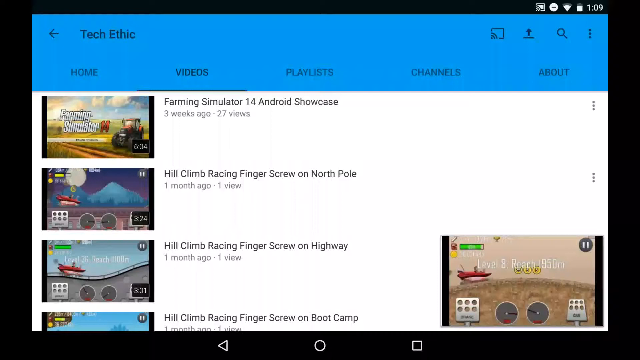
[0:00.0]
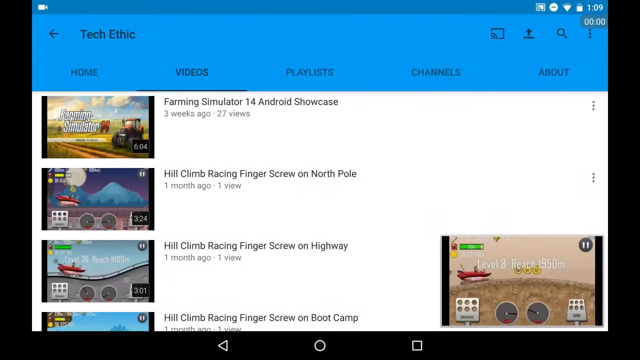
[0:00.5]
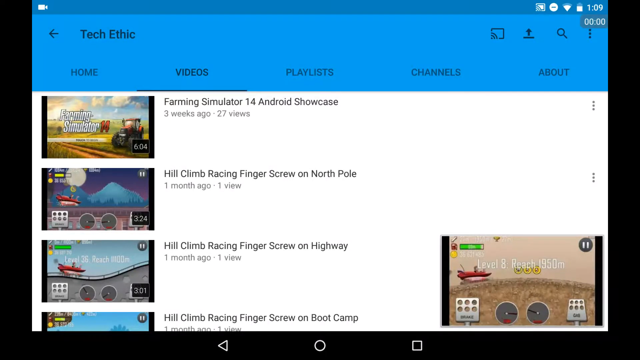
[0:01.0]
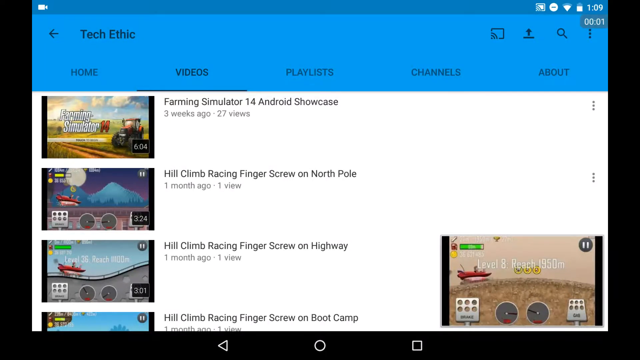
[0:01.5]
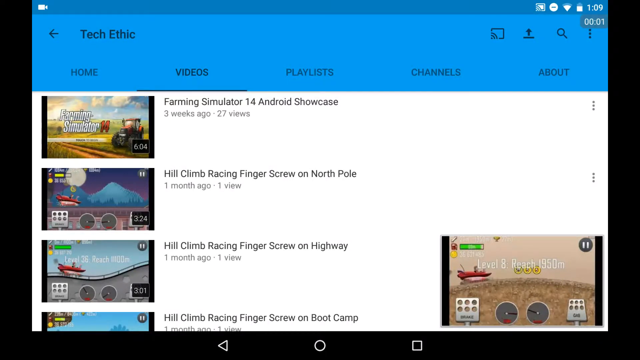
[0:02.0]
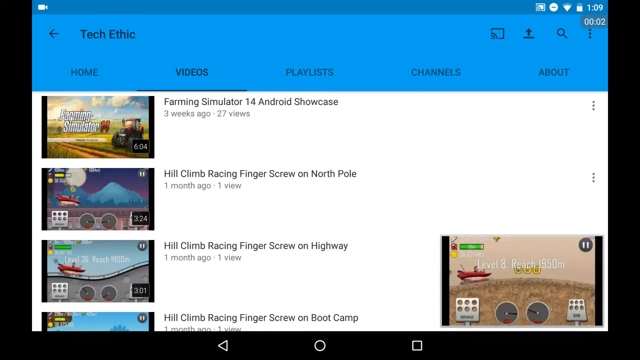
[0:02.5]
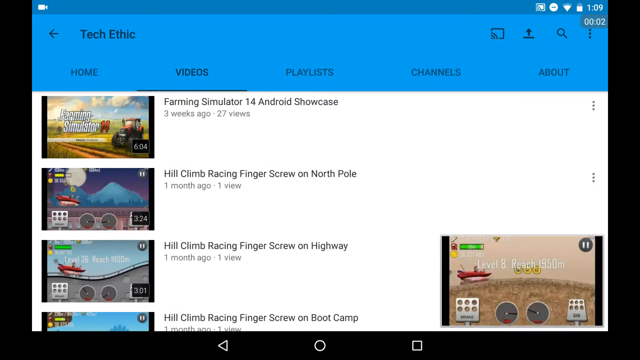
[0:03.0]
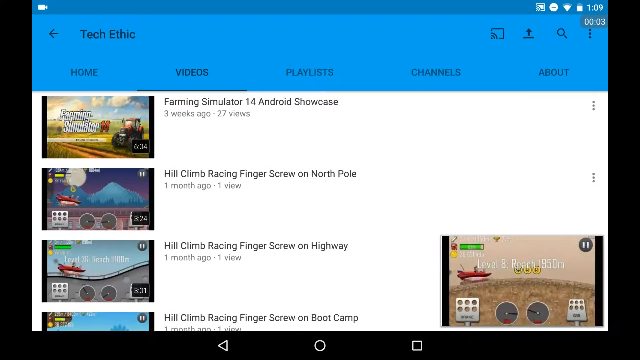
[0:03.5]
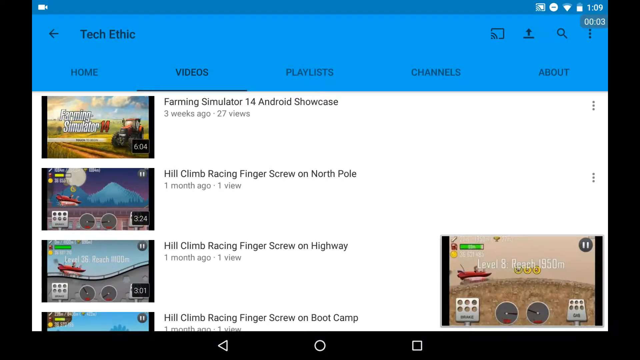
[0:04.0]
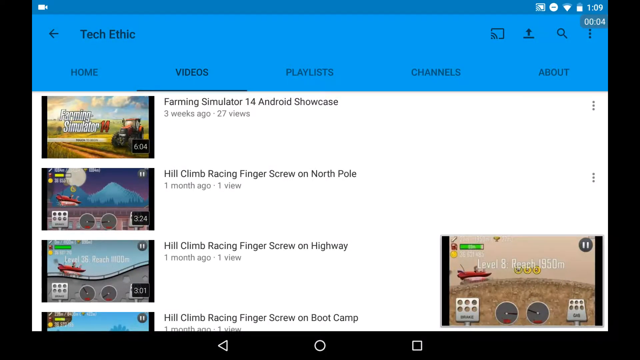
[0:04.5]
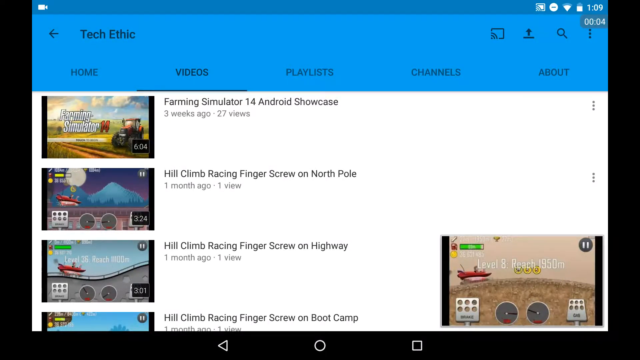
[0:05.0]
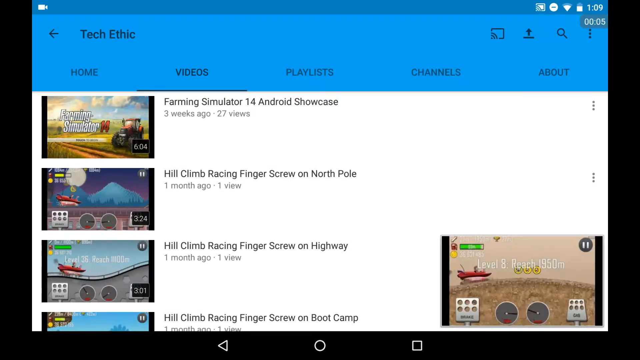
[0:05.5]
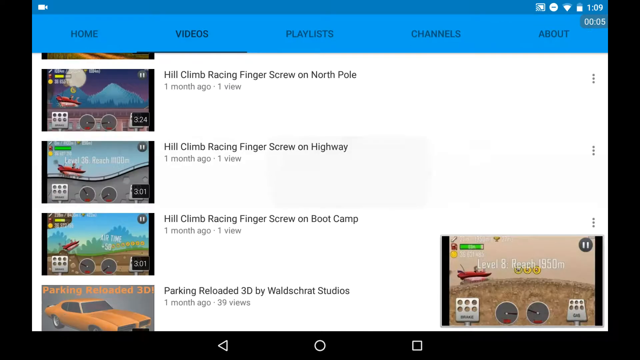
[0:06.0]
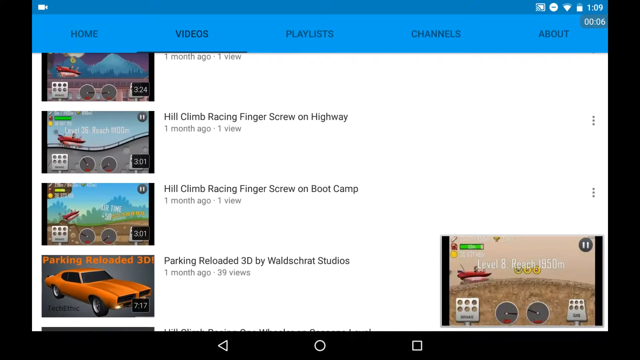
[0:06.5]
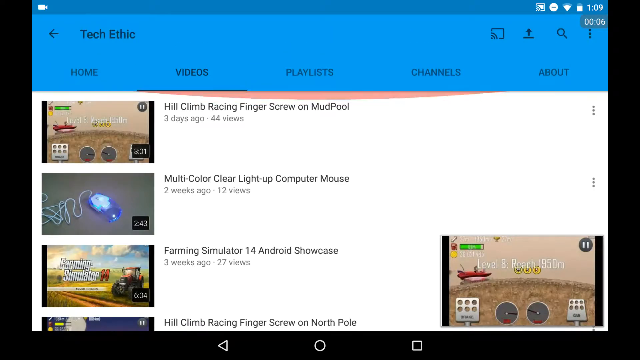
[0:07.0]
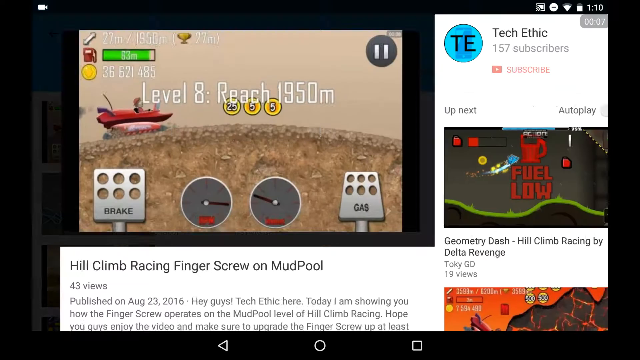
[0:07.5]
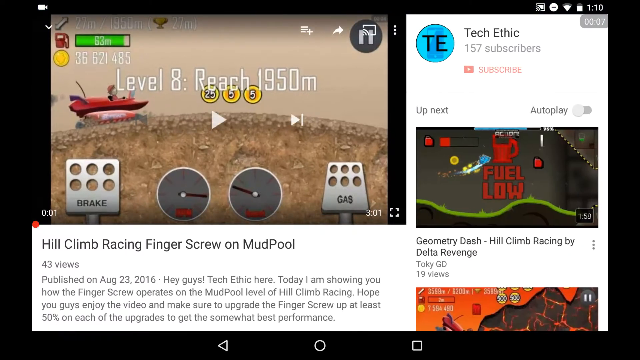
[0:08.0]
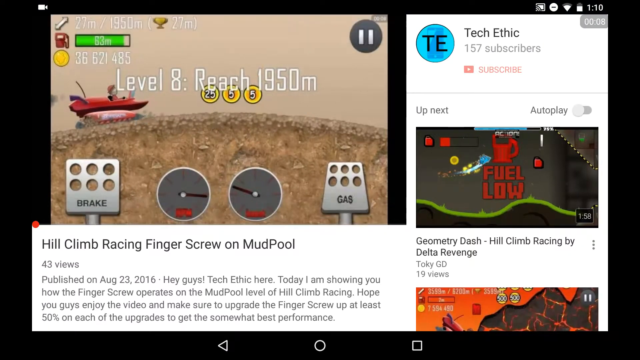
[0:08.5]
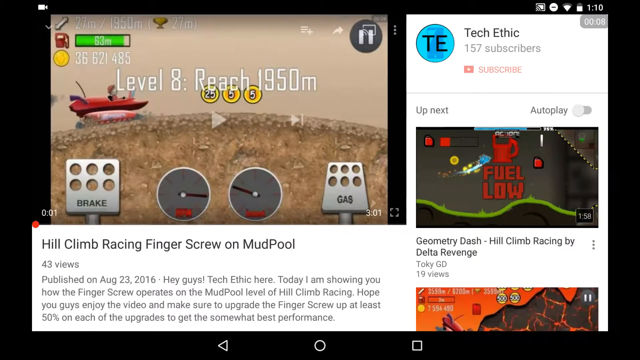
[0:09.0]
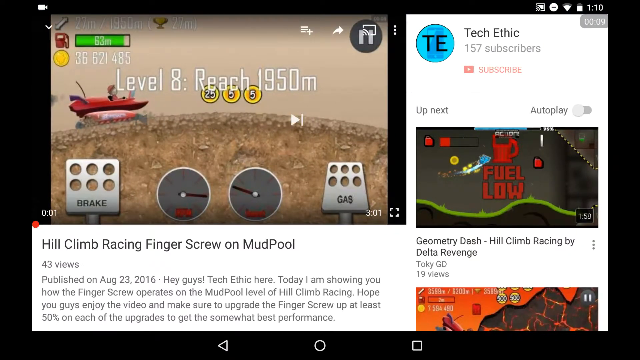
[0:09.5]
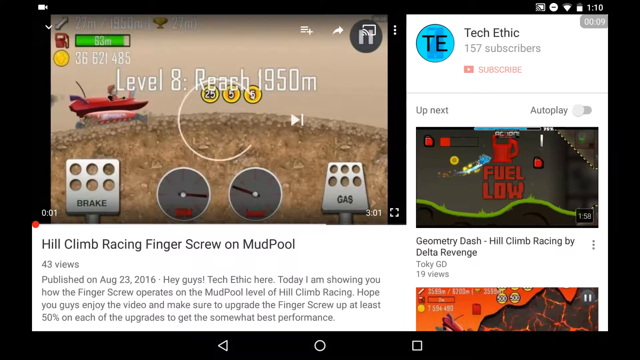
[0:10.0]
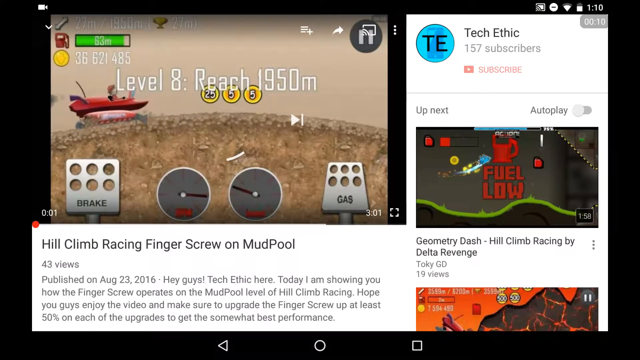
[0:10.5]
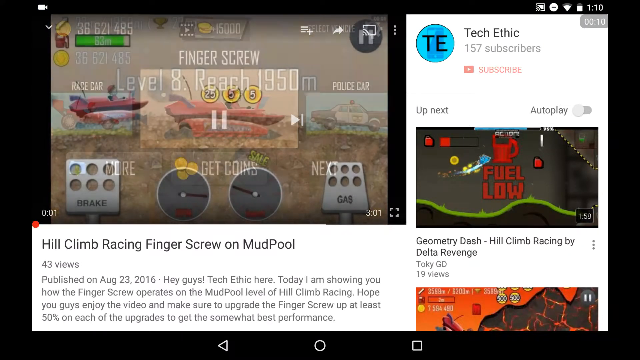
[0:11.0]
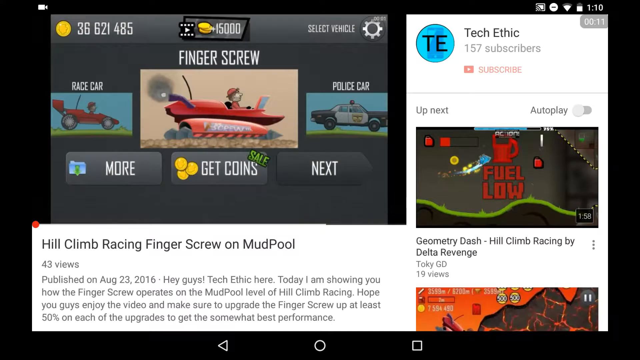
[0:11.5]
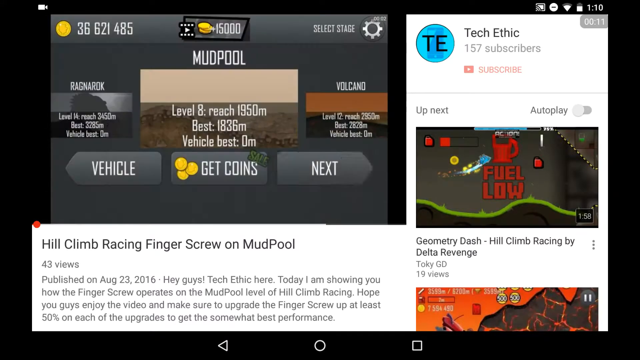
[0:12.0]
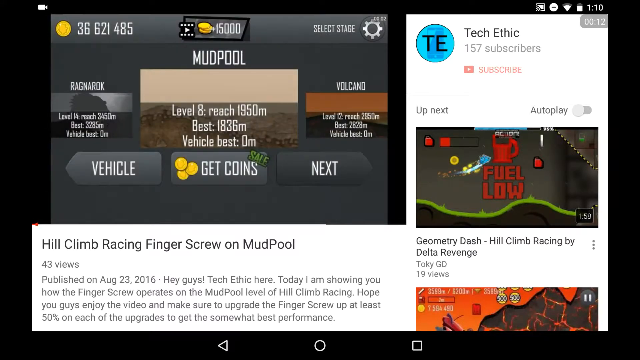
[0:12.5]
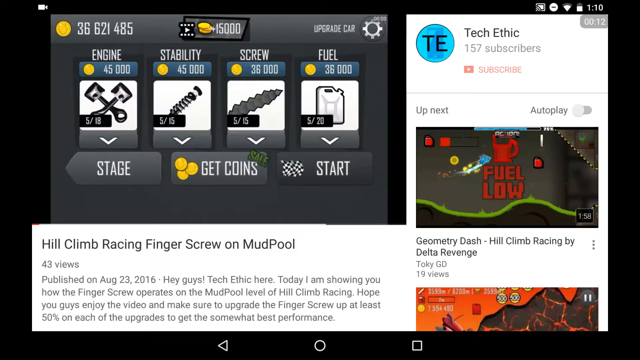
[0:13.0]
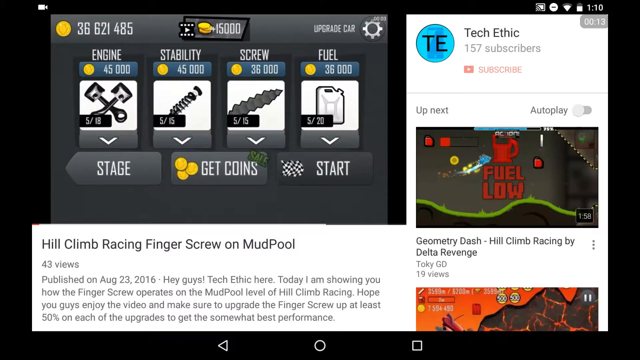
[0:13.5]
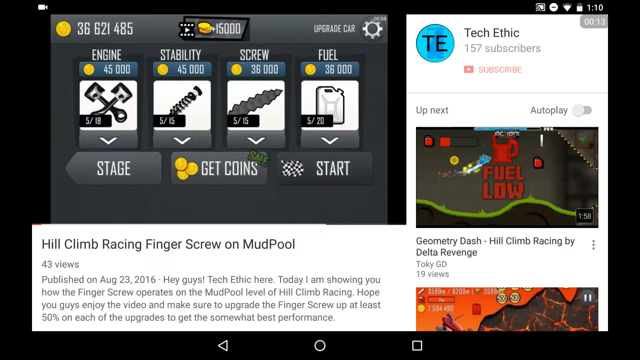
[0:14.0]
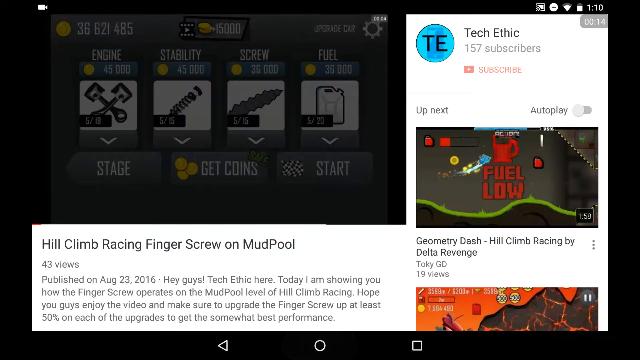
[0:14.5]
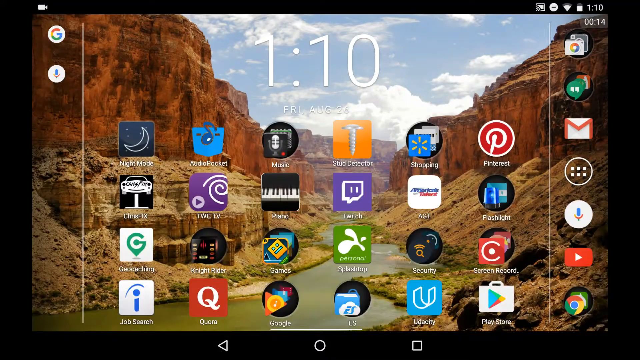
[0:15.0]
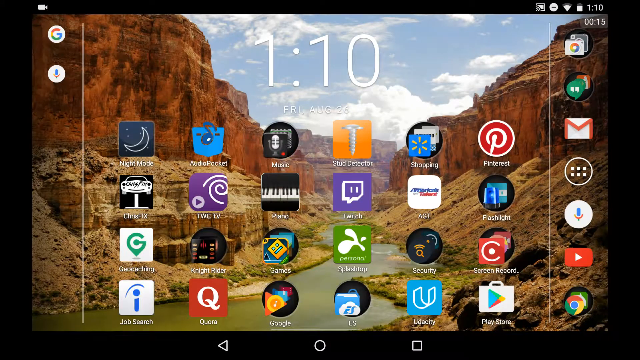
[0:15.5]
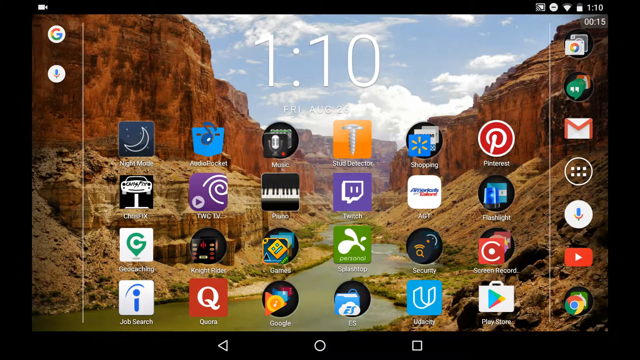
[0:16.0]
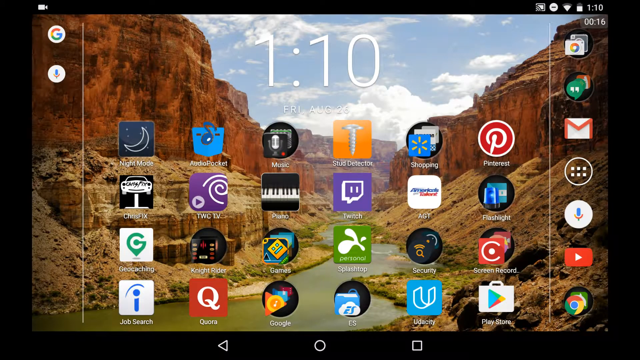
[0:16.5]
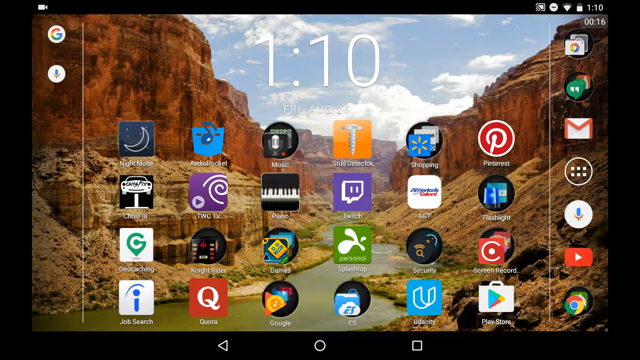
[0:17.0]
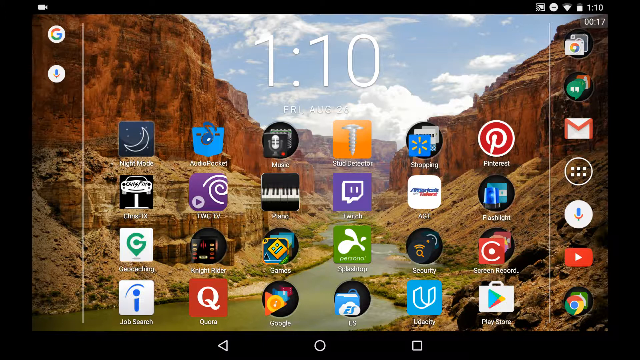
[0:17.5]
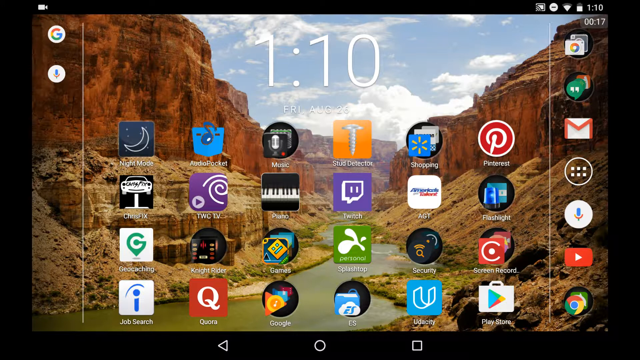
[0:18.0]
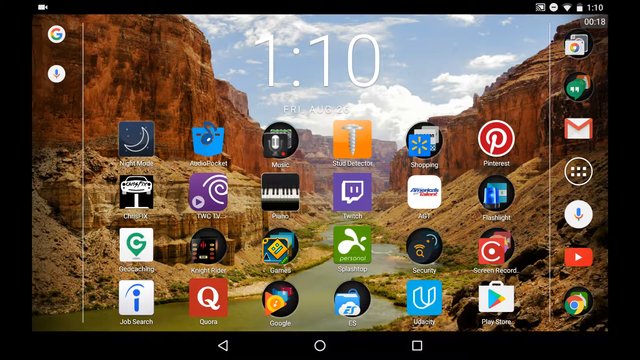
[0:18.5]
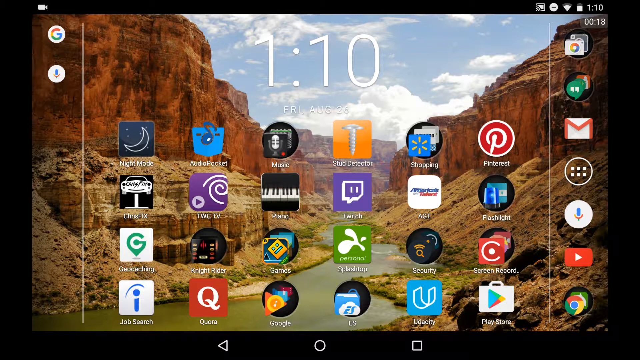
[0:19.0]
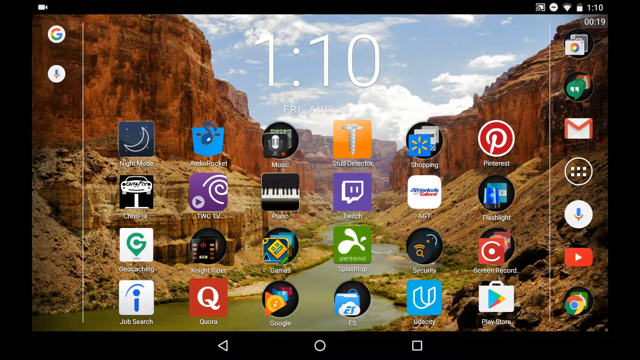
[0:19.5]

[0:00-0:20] A vertical list of several gameplay video options appears, including Farming Simulator 14, Hill Climb Racing Finger Screw on North Pole, Hill Climb Racing Finger Screw on Highway, and Hill Climb Racing Finger Screw on Boot Camp. A video thumbnail is in the bottom right-hand side of the screen. The user first pauses on the screen and slides the list vertically, revealing a few more options, then clicks on the thumbnail in the bottom right corner. Once the thumbnail enlarges, it shows the video is for Hill Climb Racing Finger Screw on Mud Pool. A YouTube video opens on the starting screen for level 8, with a red hovercraft sitting on some dirt. The heads-up display has a brake pedal at the bottom left, a gas pedal at the bottom right, and two speed gauges. The user moves through several other screens showing engine, stability, screws, and fuel, which look like power-ups that can potentially be purchased with in-game currency.